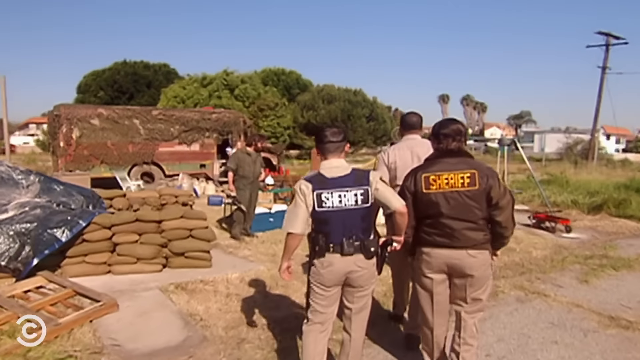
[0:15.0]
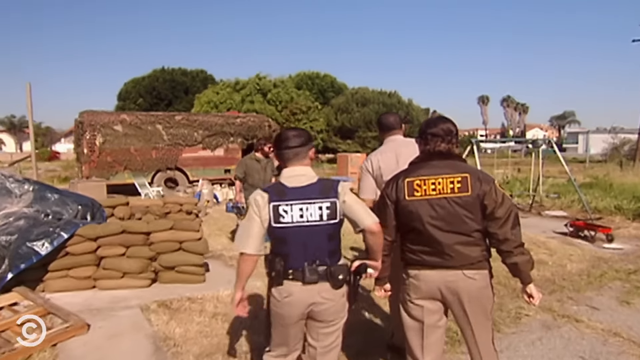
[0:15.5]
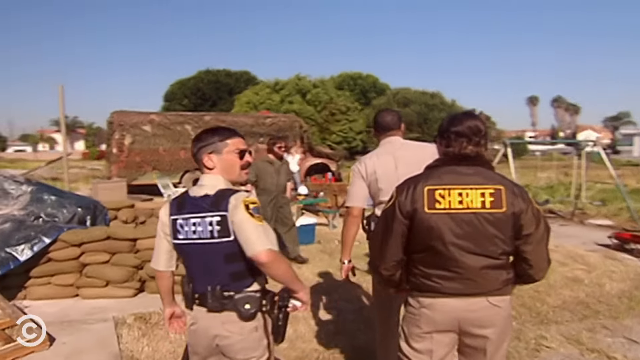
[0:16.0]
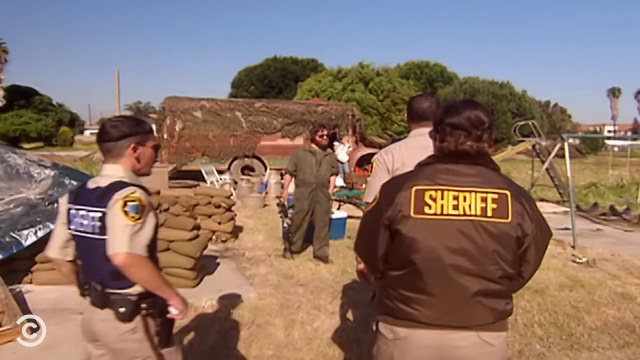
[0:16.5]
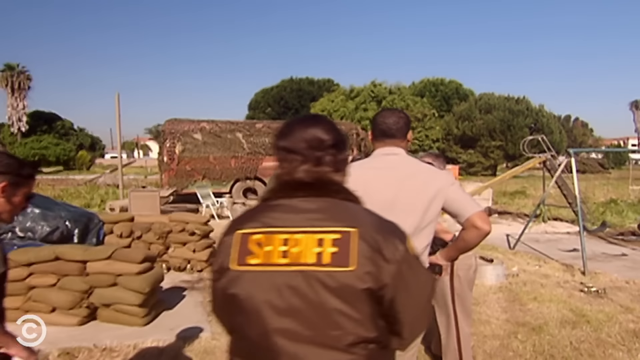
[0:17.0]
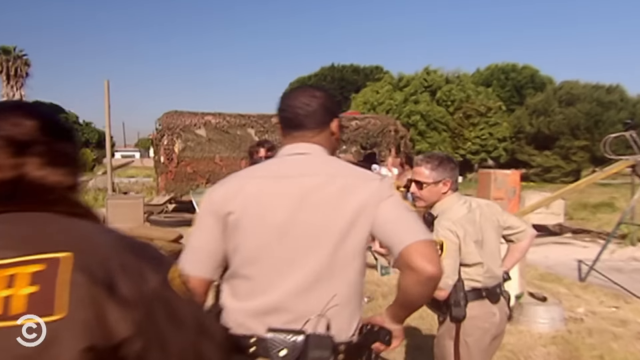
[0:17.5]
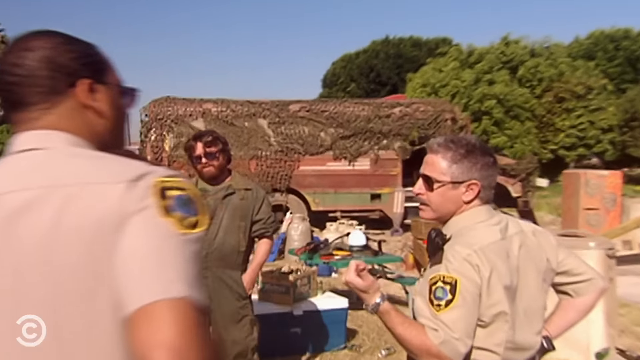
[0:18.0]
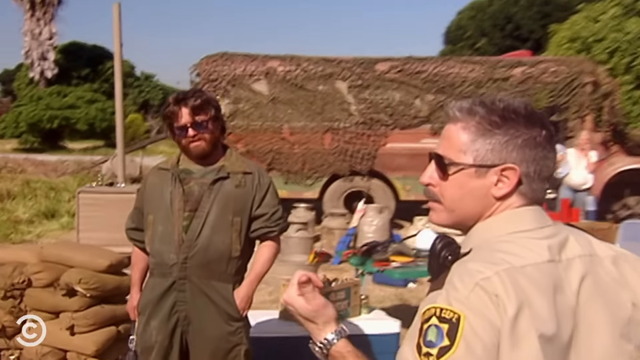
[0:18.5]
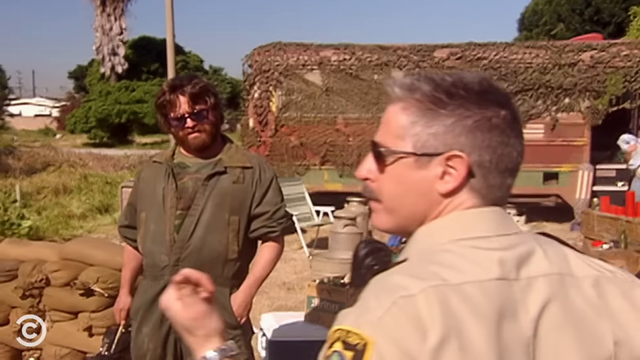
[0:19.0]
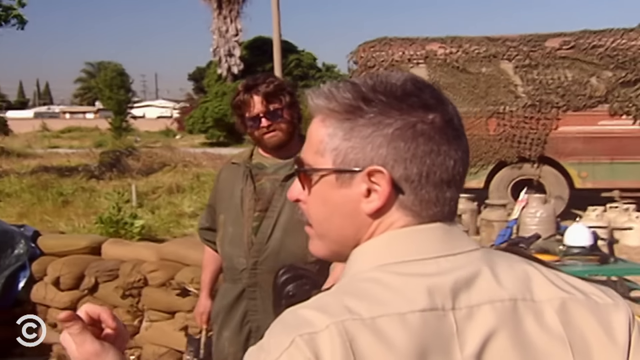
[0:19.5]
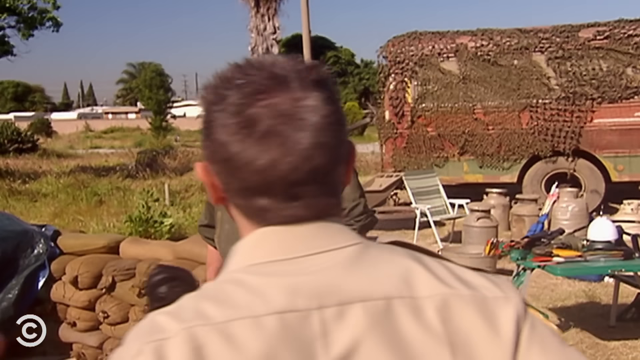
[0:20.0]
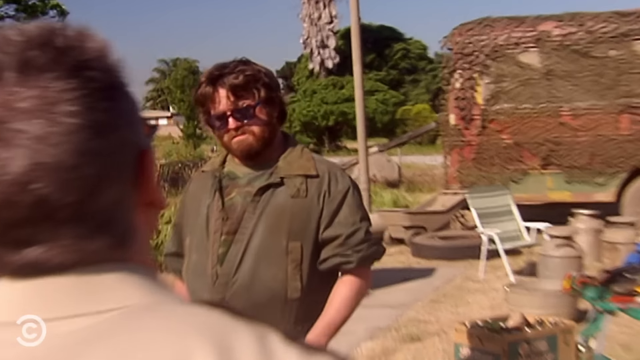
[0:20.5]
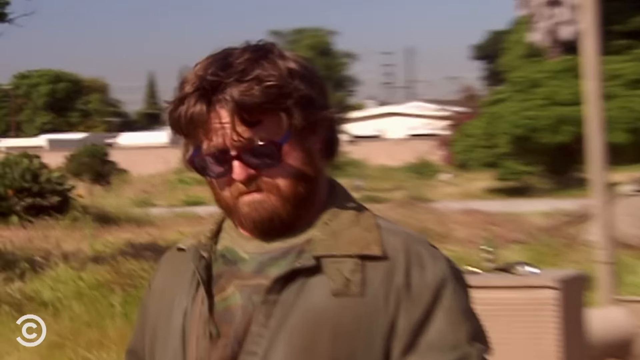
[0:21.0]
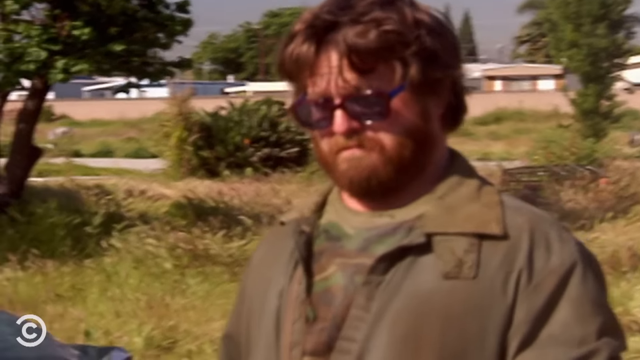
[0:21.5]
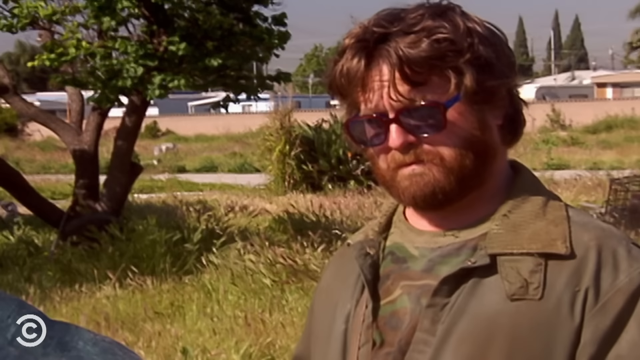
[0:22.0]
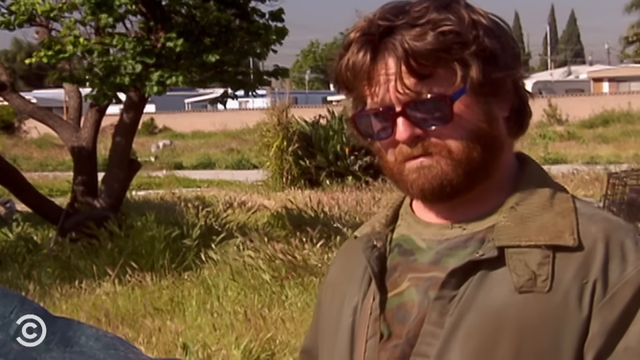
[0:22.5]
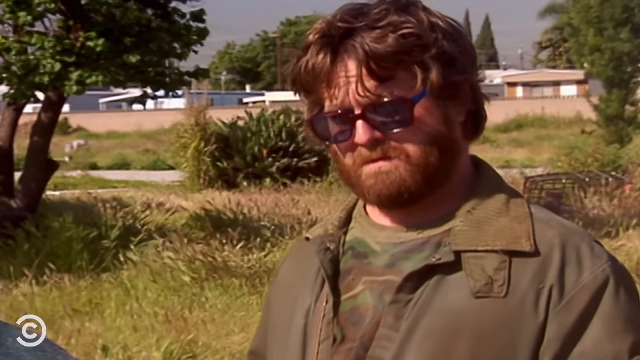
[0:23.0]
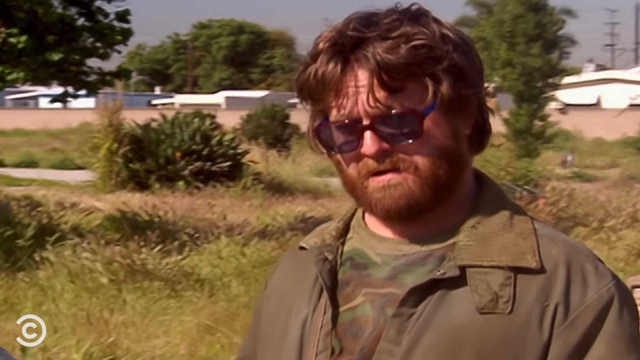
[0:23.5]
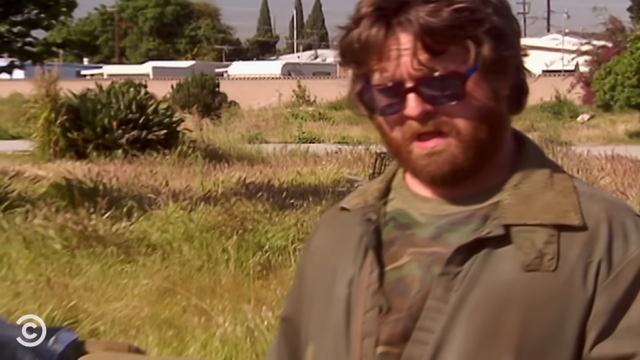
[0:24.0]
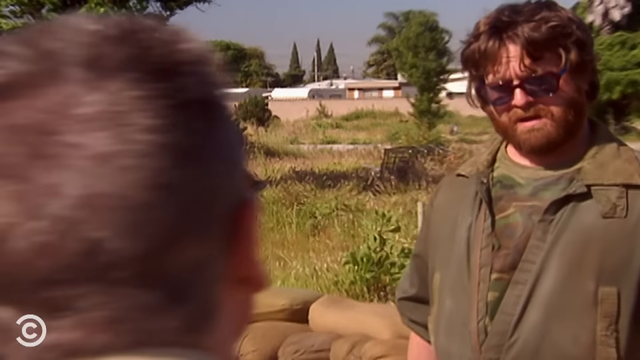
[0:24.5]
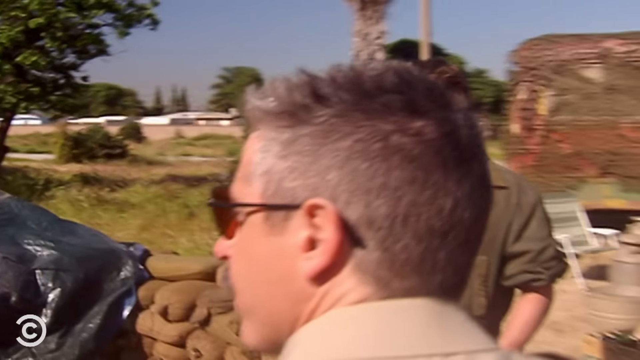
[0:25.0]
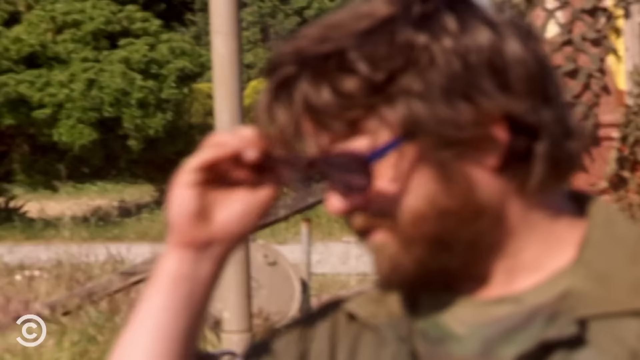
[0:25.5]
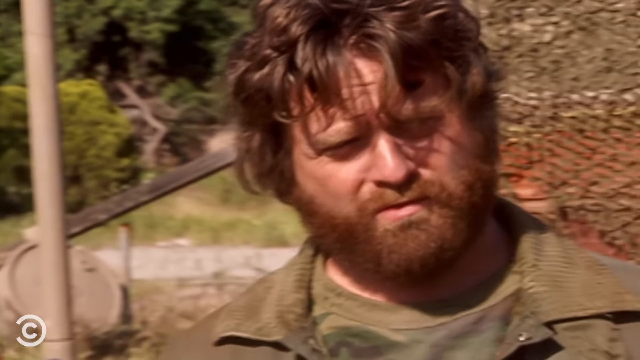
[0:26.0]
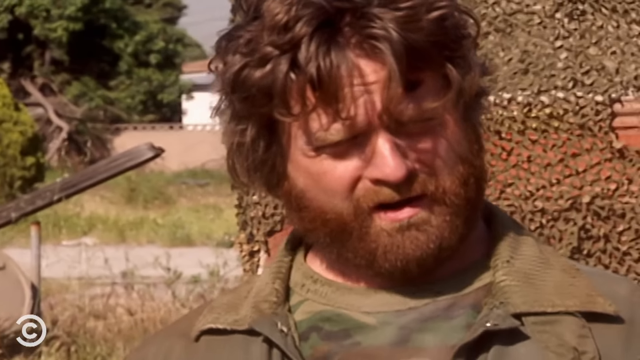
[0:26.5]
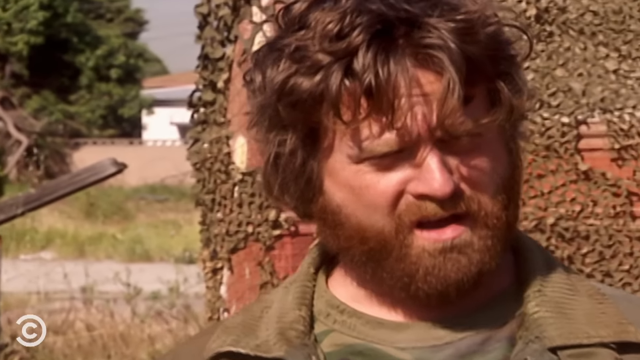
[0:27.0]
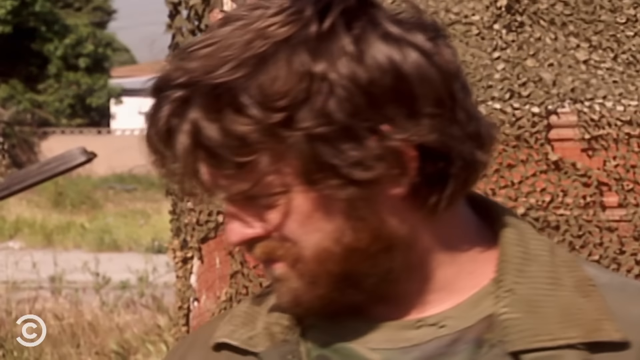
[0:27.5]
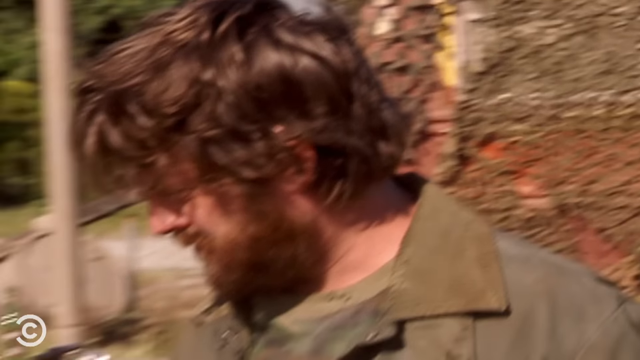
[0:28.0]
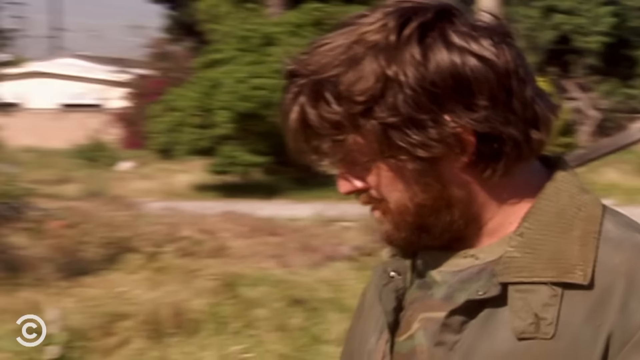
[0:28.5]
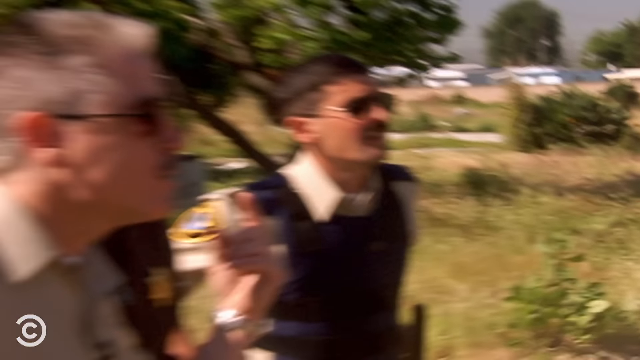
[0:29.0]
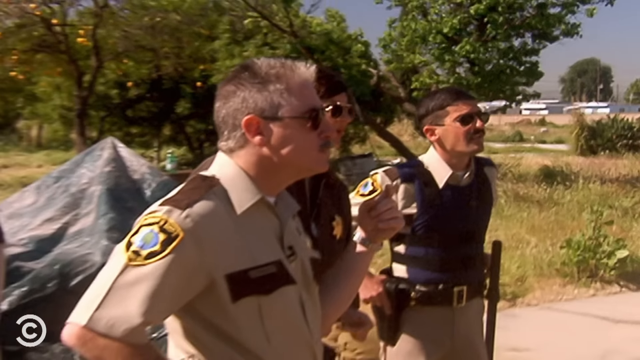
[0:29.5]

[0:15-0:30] Four cops approach the man in the jumpsuit, and there is a close-up of him from the chest up as he looks at the cops. He is wearing sunglasses, which he takes off kind of dramatically as he talks to the cops. The exchange looks kind of confrontational, based on facial expressions, and they do not look very happy with each other. The shots go back and forth between the guy and the cops as they talk. The four cops are sort of standing in a line in front of him. The guy wears a camo t-shirt under his green jumpsuit and has a beard and long, shaggy hair. In the background are trees and other trailers. Behind the guy is the bus, with chairs and a table with a bunch of stuff on it. Cement bags are stacked on top of each other like a barricade.